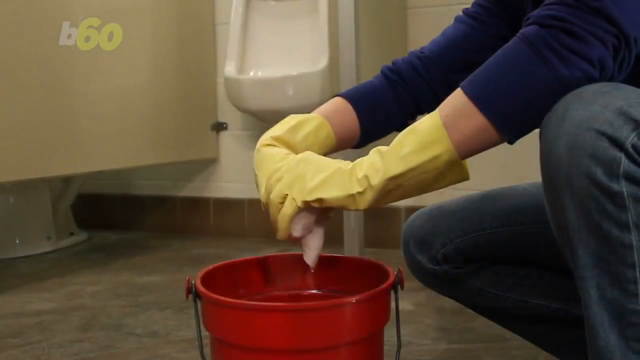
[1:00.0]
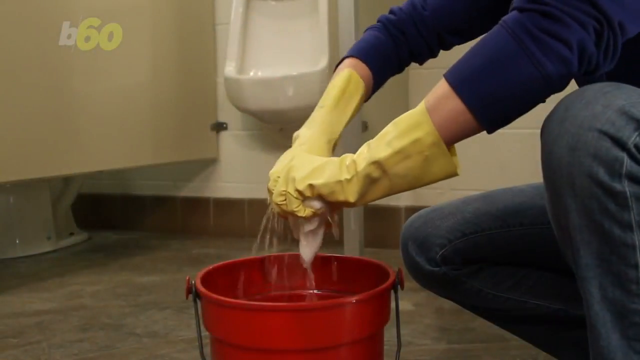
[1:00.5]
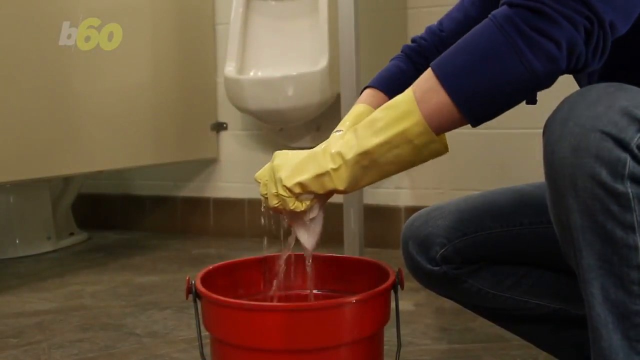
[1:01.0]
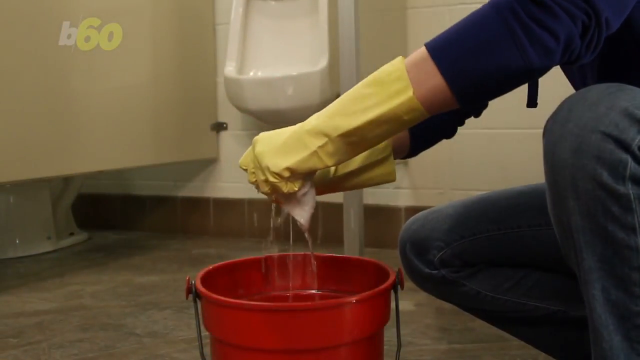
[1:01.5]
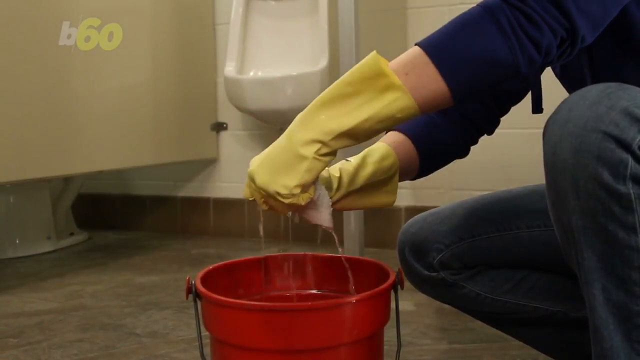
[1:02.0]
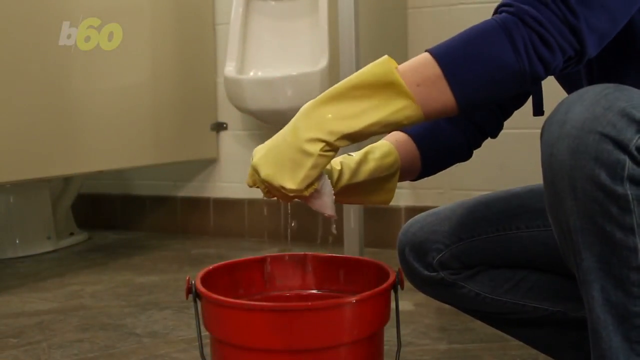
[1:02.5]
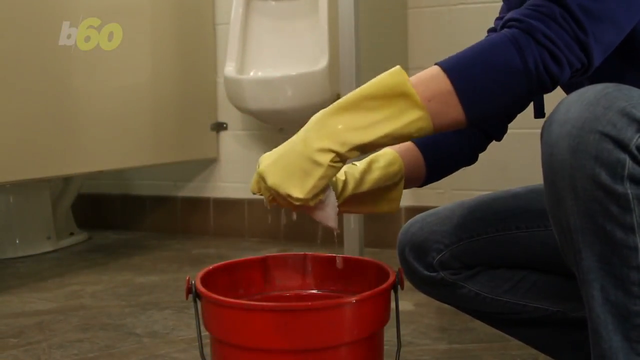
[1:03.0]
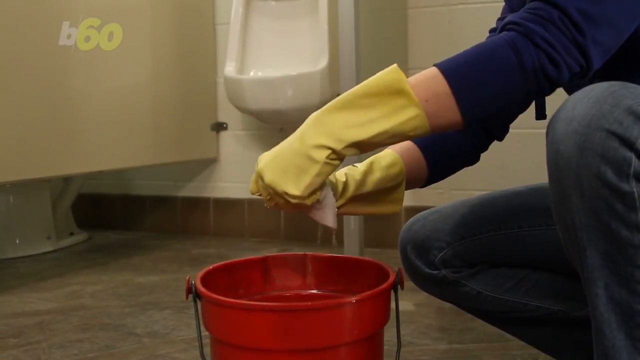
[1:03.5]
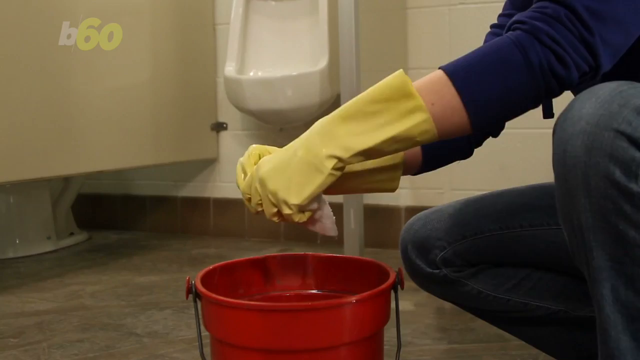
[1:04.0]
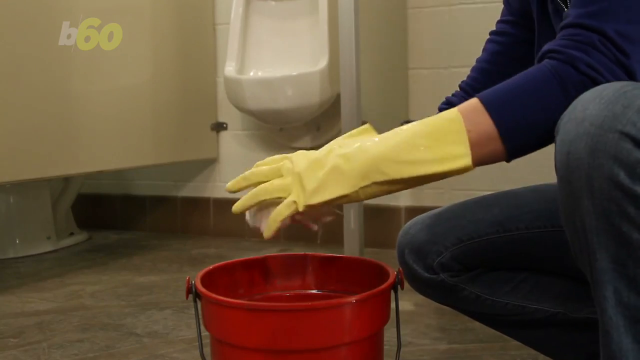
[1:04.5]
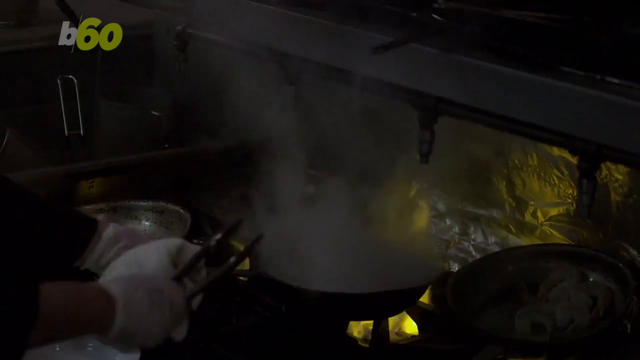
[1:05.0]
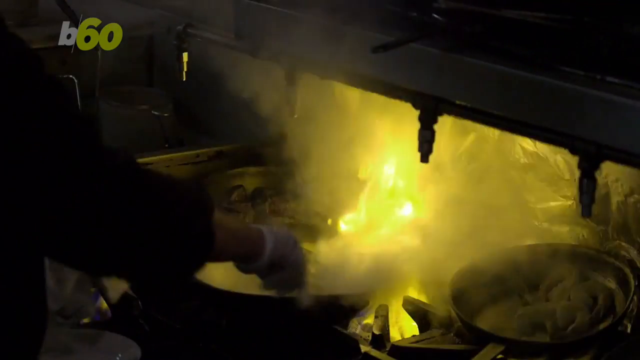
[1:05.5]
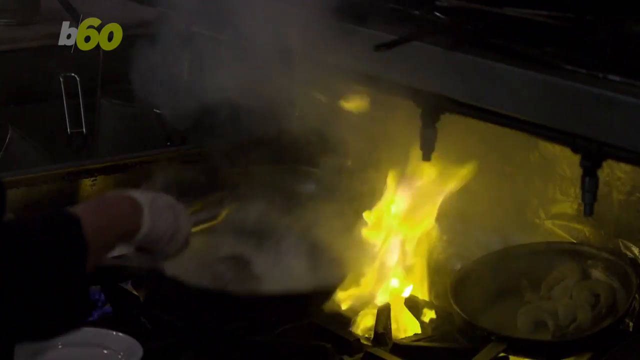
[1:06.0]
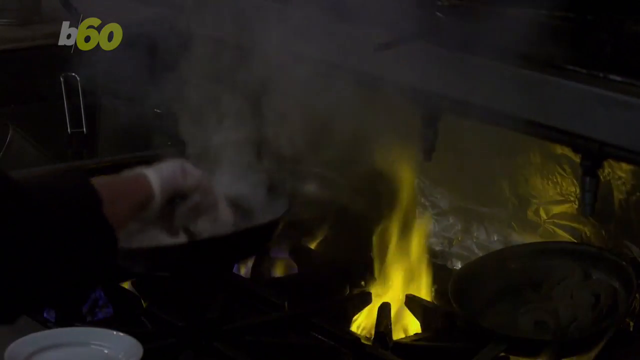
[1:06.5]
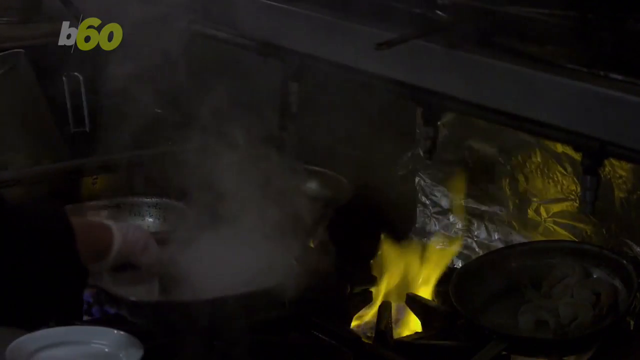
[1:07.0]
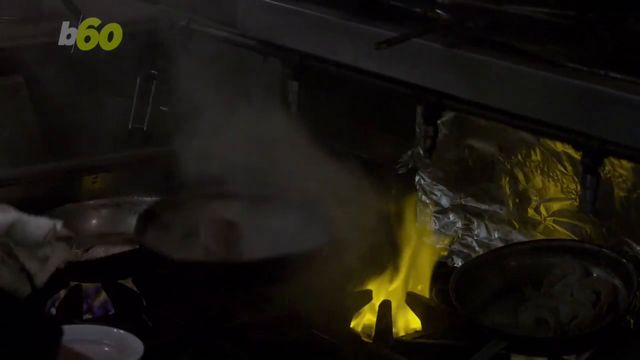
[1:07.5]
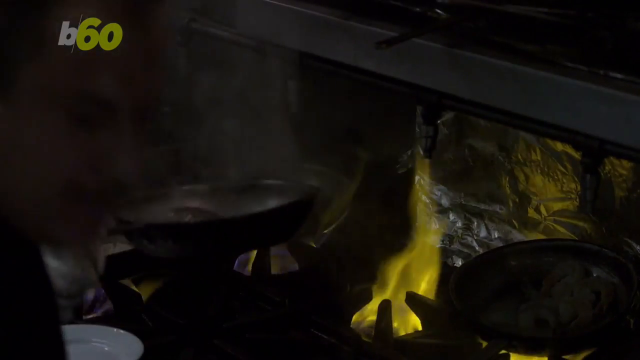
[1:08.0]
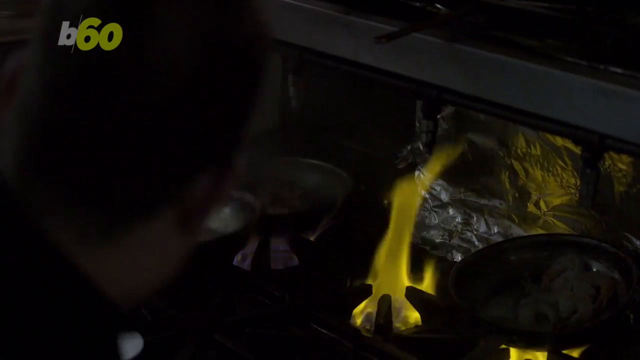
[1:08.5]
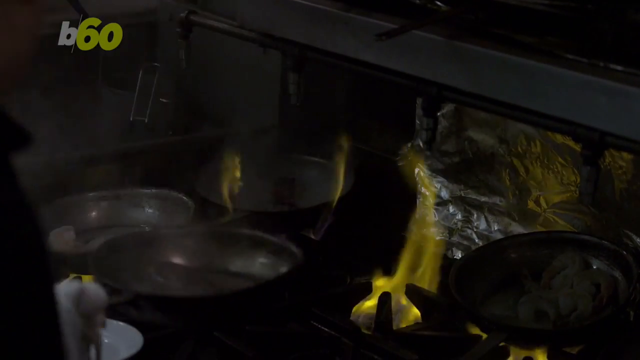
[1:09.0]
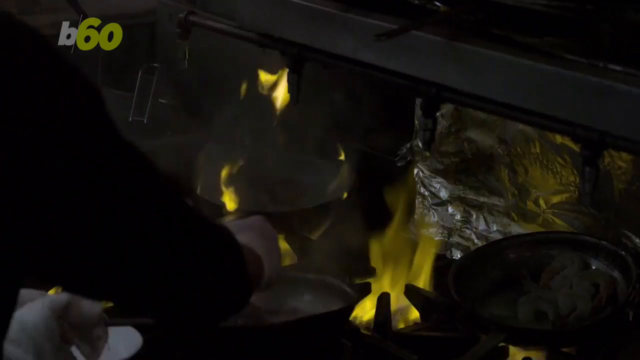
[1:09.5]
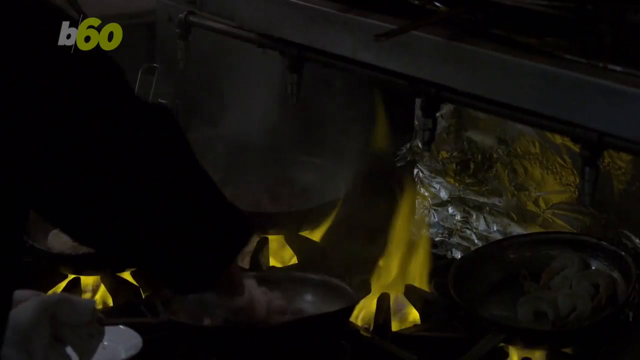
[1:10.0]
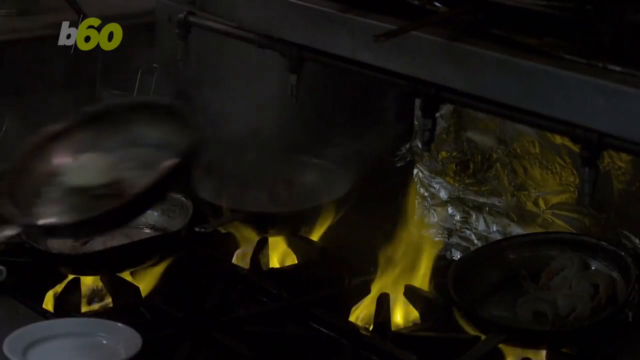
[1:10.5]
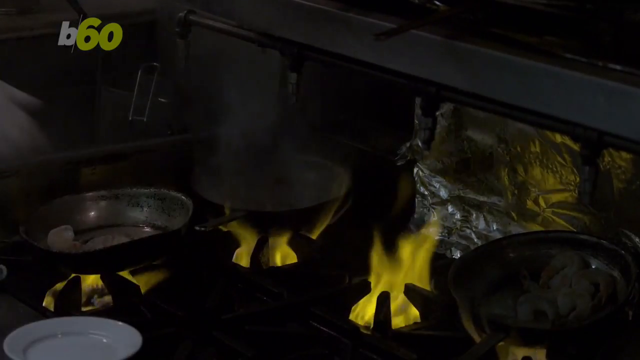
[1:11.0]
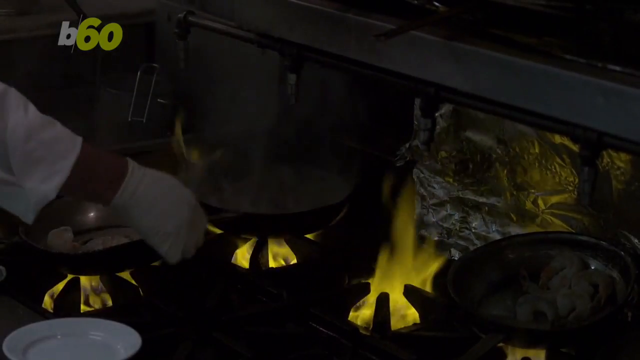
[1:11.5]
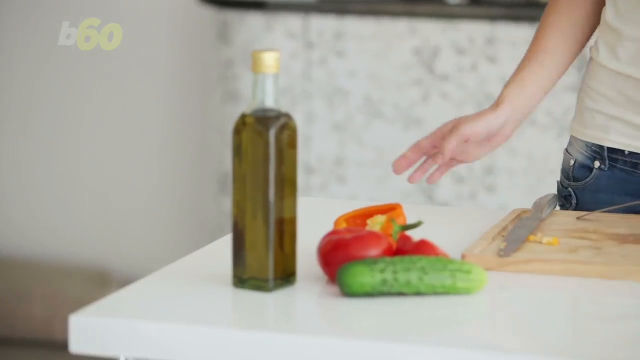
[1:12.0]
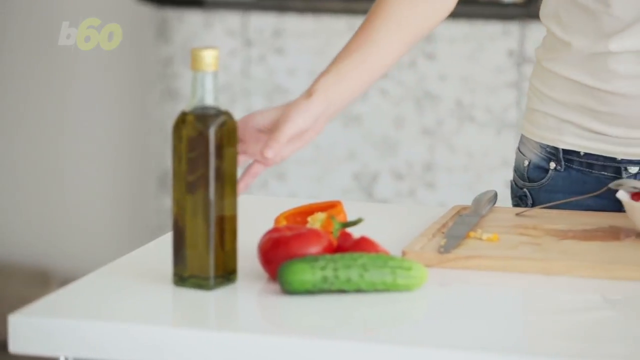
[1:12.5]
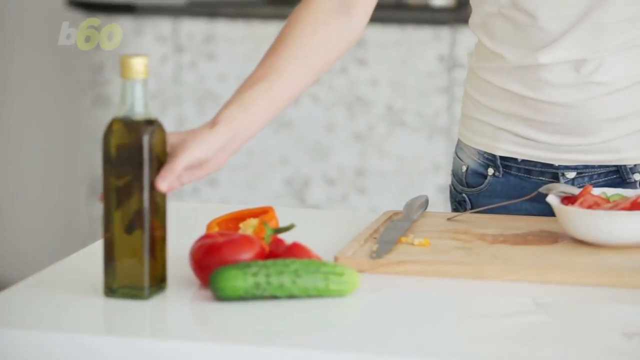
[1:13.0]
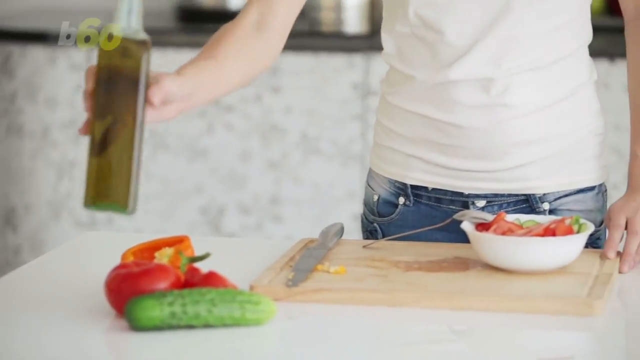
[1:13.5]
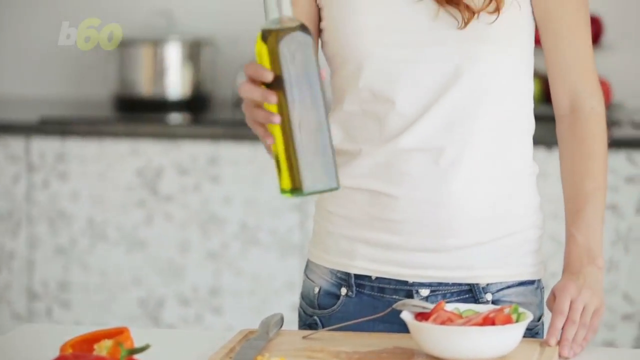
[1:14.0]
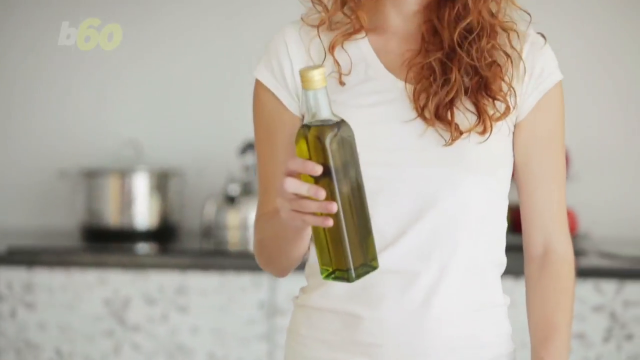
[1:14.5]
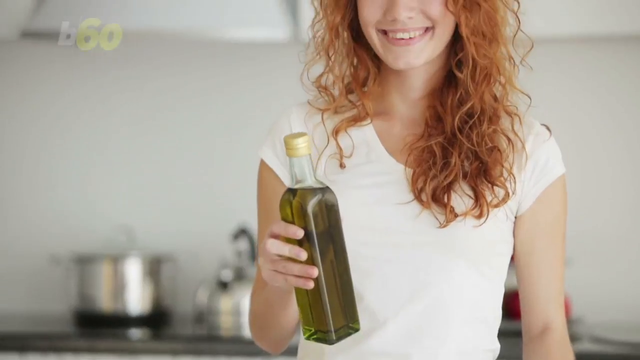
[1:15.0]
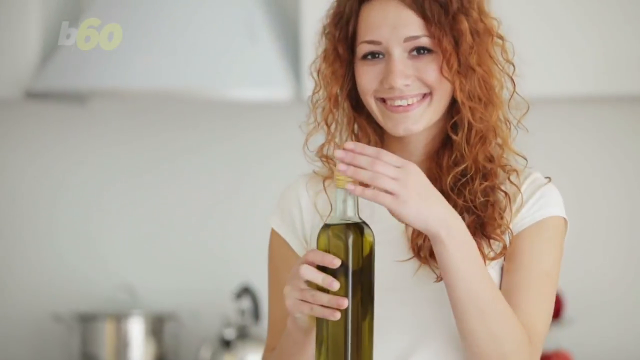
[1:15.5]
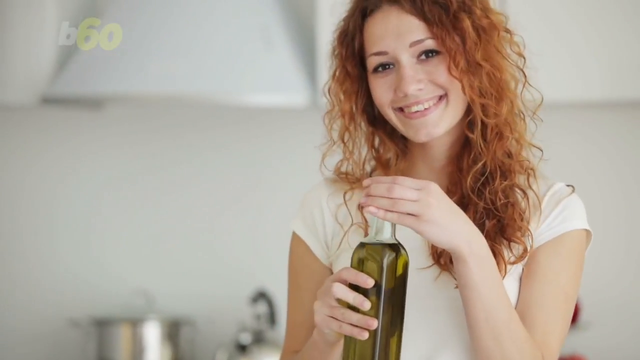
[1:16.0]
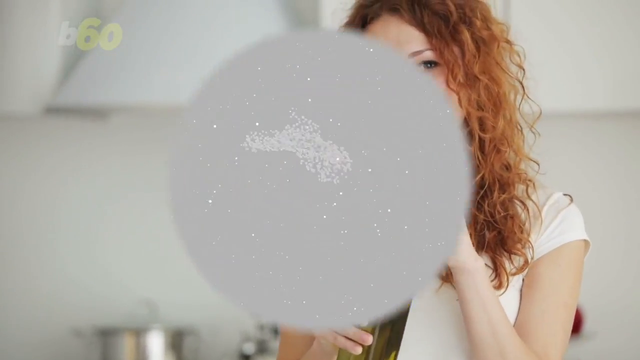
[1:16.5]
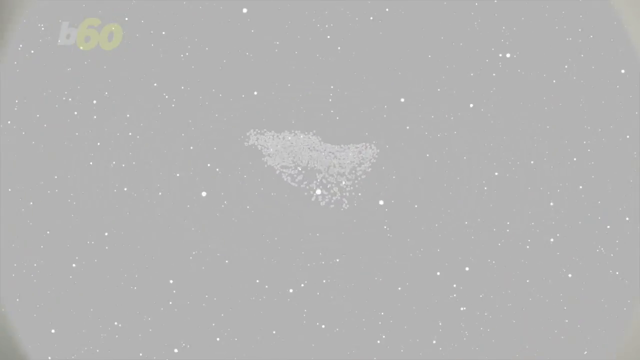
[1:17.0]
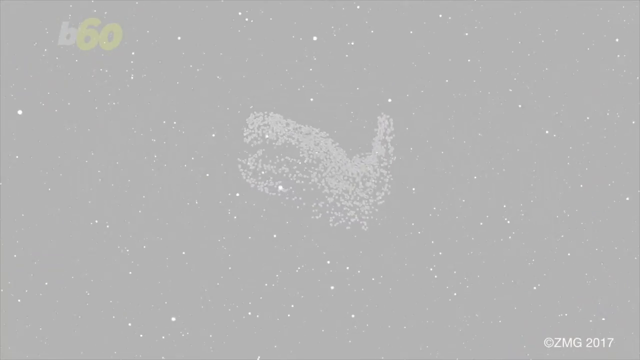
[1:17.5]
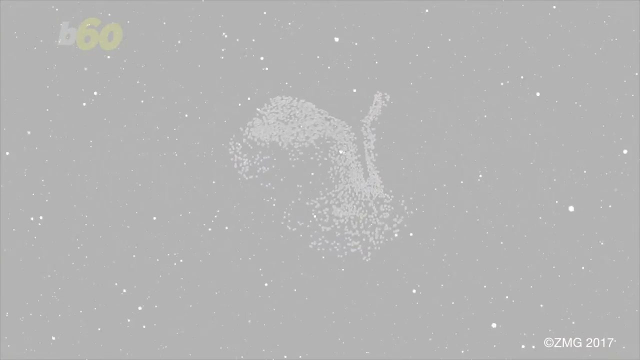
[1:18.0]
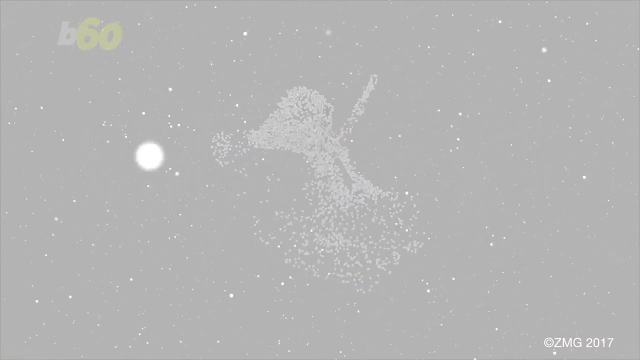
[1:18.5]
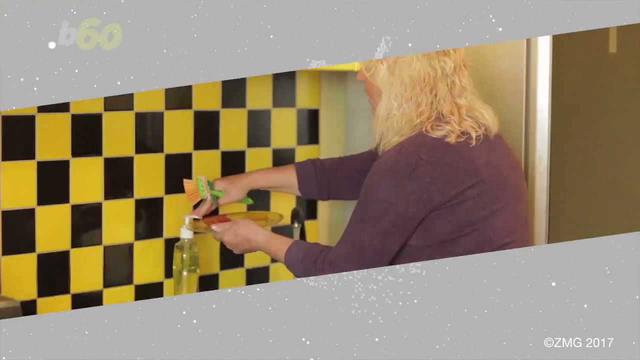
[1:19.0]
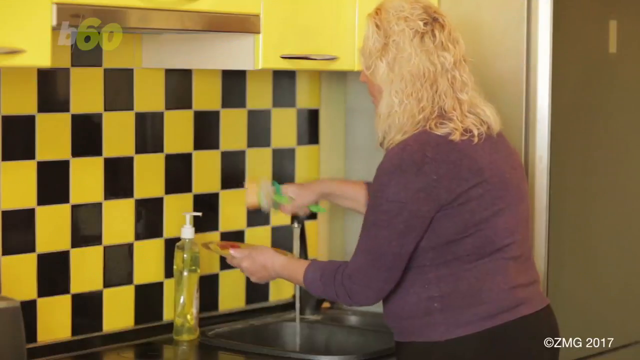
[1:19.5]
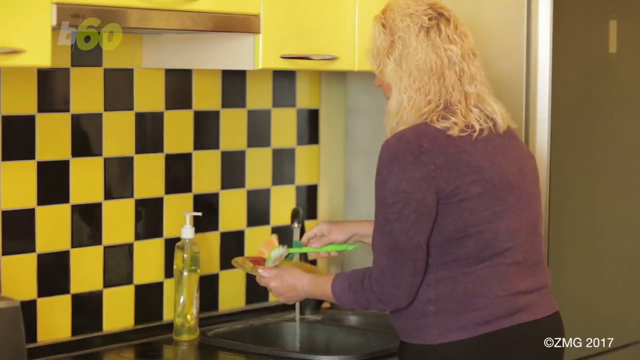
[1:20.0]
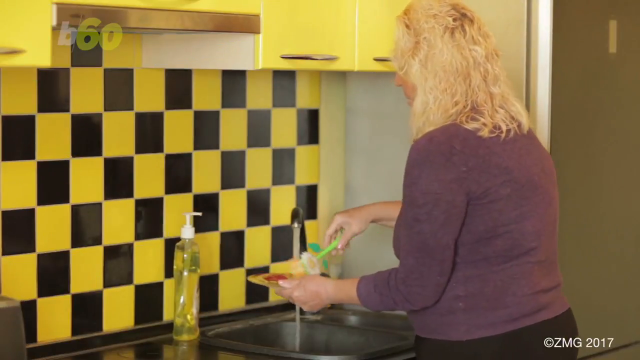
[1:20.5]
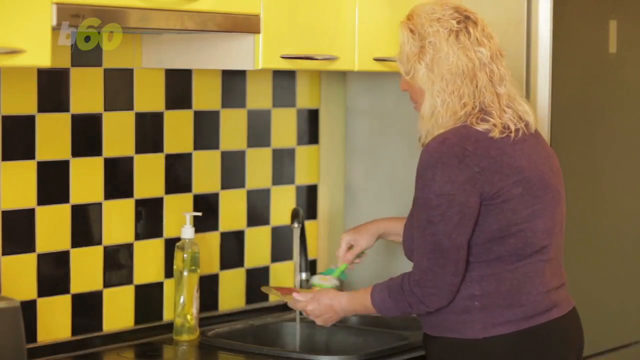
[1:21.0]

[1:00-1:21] A person wearing long yellow rubber gloves is bent down over a red pail in front of a urinal in a public bathroom, wringing water out of a rag and shaking it a little over the pail. Next, somebody cooks on a stove at a restaurant, with many burners going, many skillets on the burners and the flames turned up high. A person, apparently at home, makes a salad and adds some oil while something like germs floats together on the screen in a big white cloud. The person making the salad smiles. B60 appears in the upper left-hand corner.